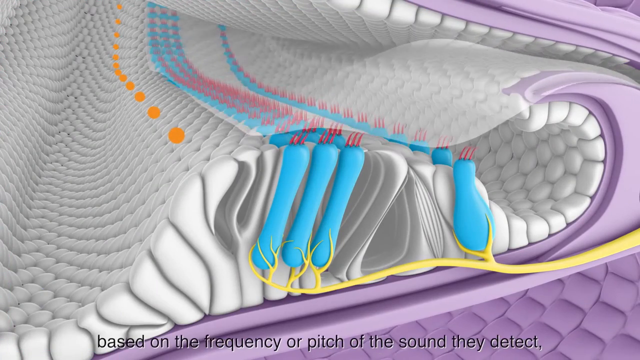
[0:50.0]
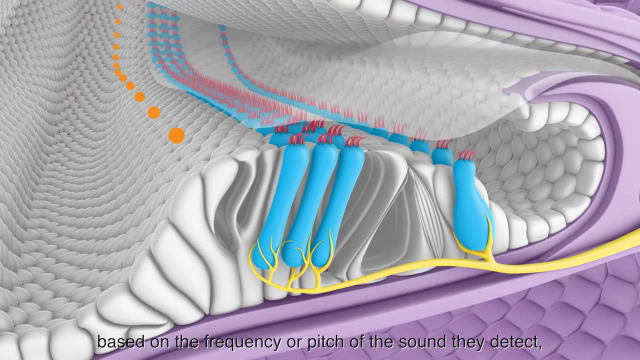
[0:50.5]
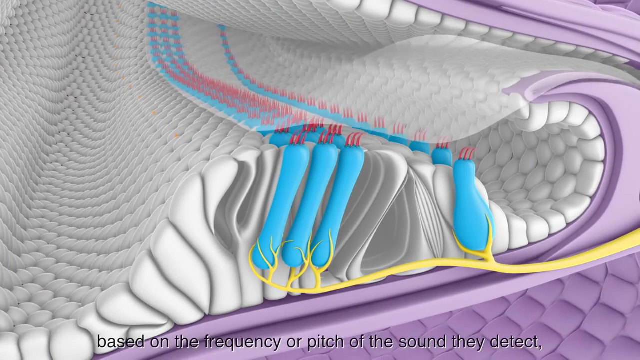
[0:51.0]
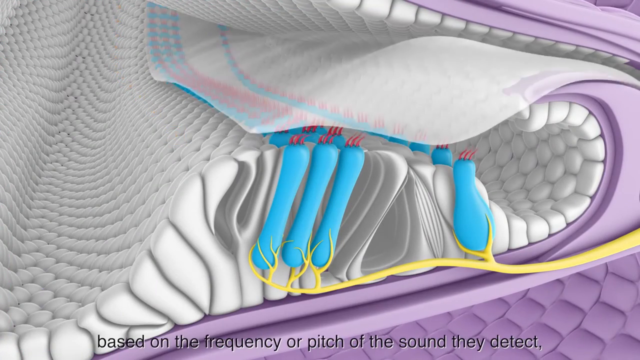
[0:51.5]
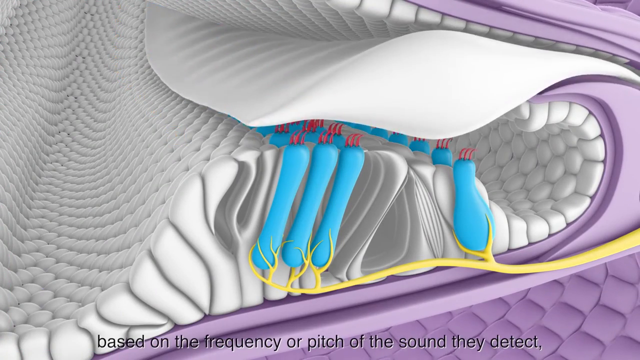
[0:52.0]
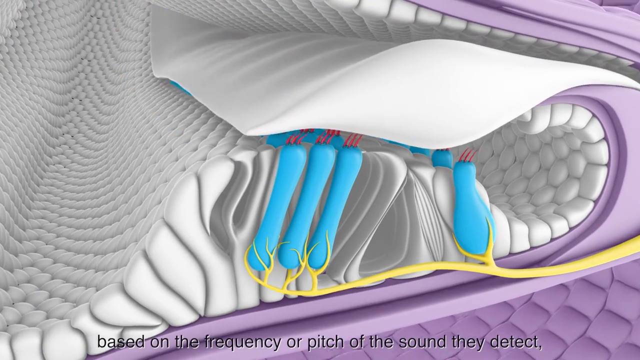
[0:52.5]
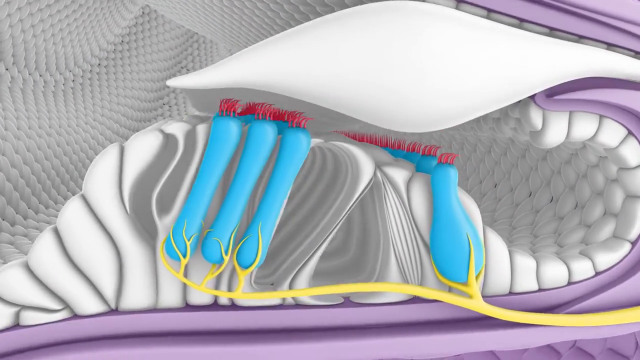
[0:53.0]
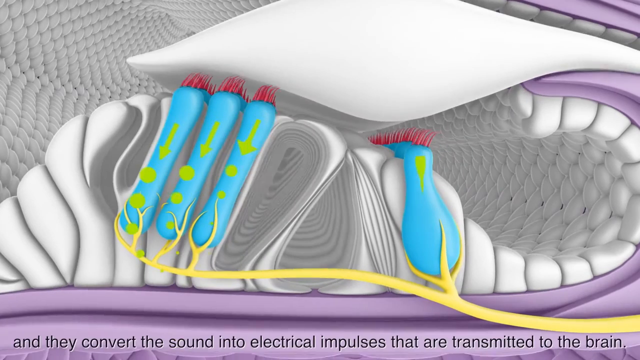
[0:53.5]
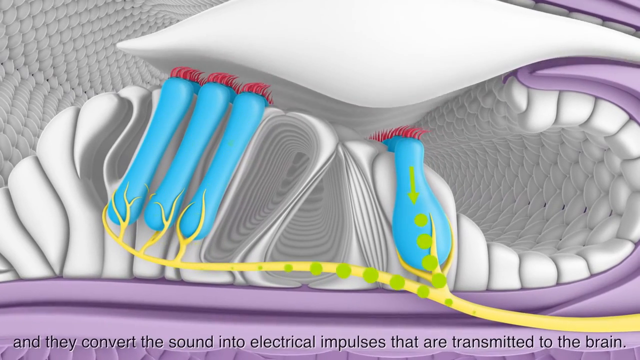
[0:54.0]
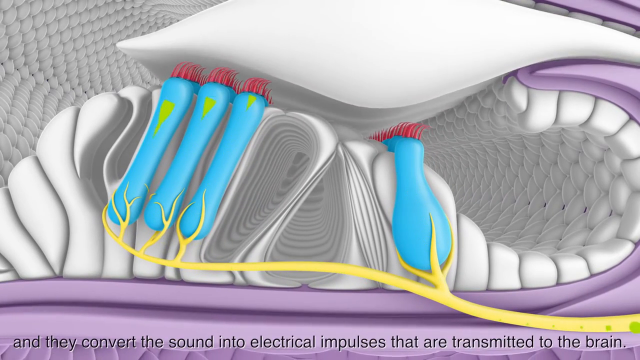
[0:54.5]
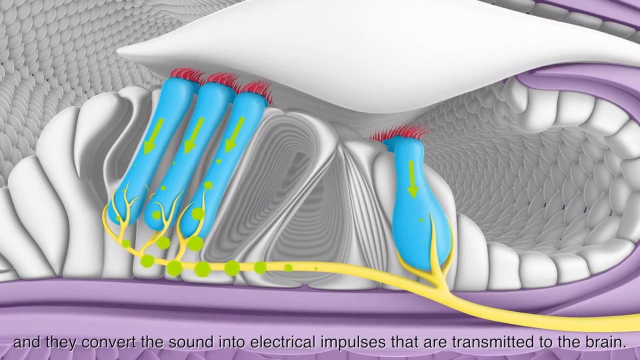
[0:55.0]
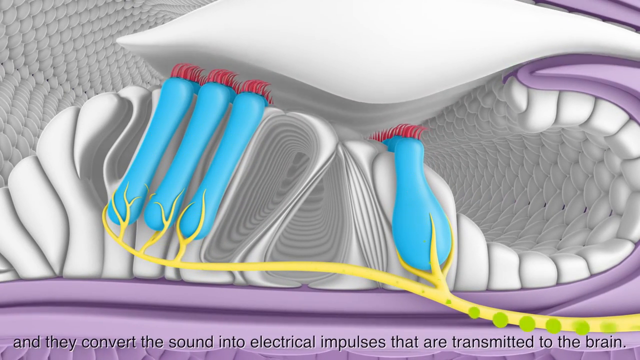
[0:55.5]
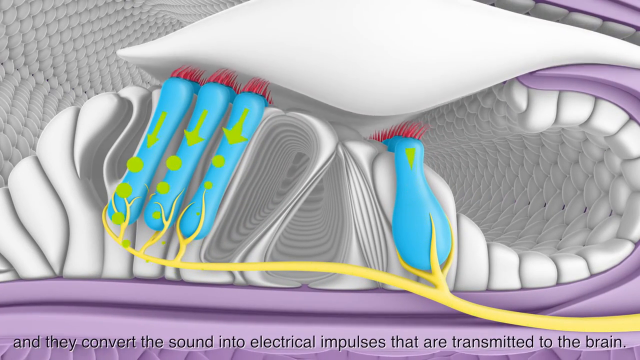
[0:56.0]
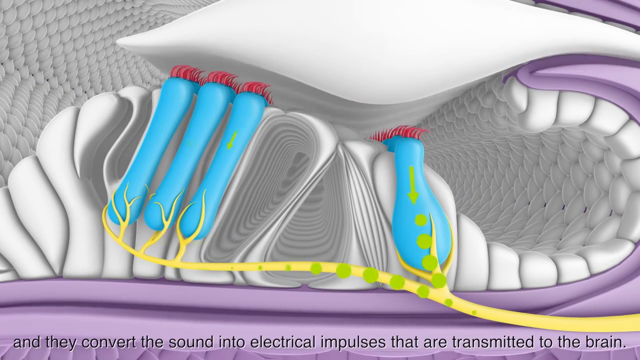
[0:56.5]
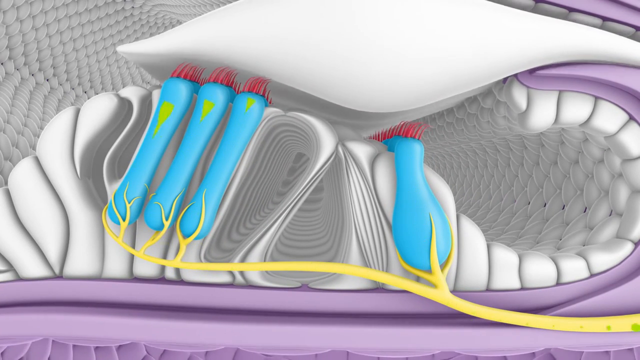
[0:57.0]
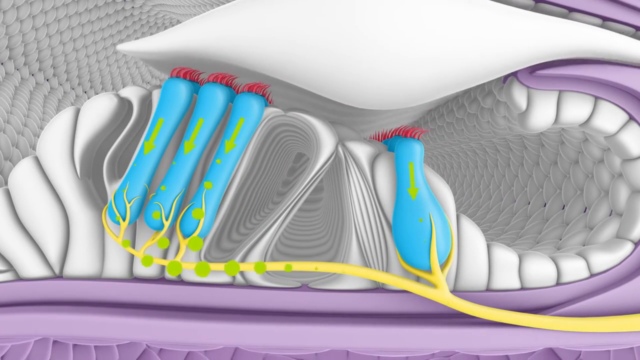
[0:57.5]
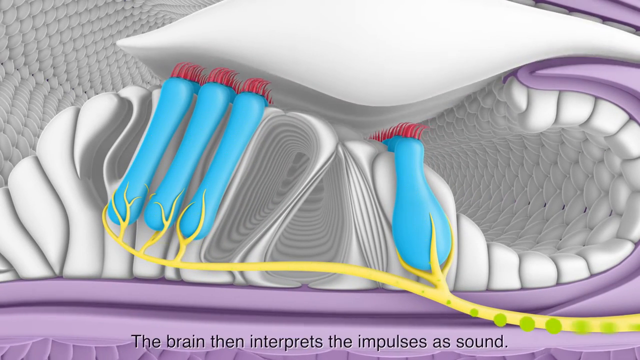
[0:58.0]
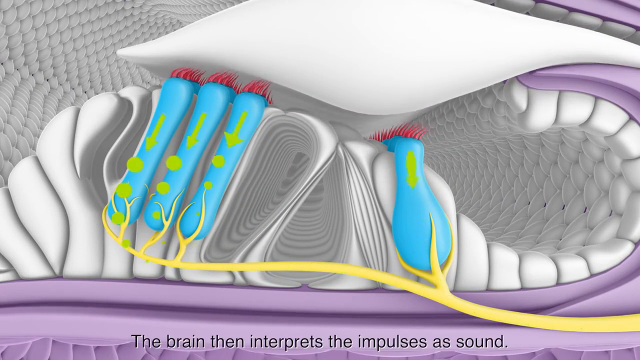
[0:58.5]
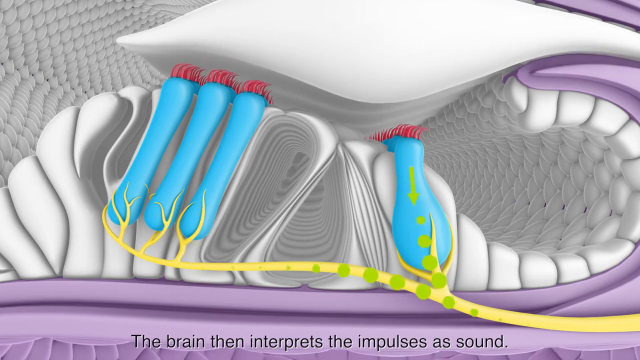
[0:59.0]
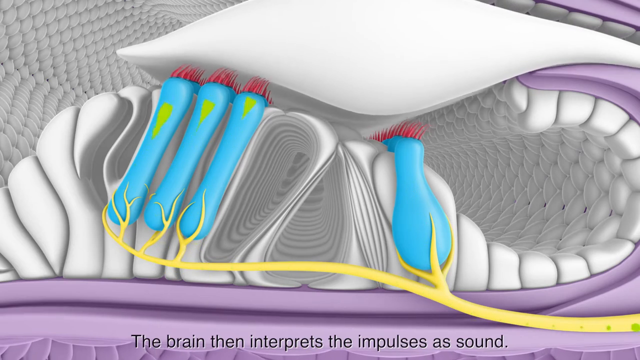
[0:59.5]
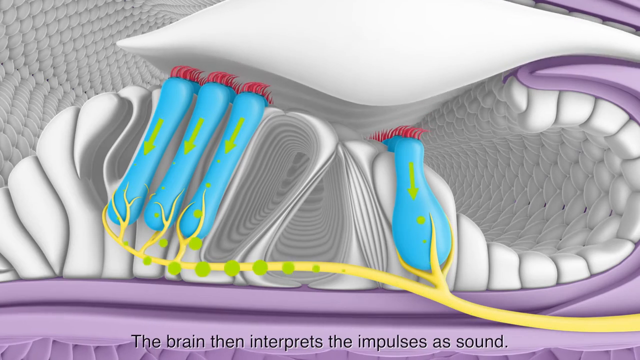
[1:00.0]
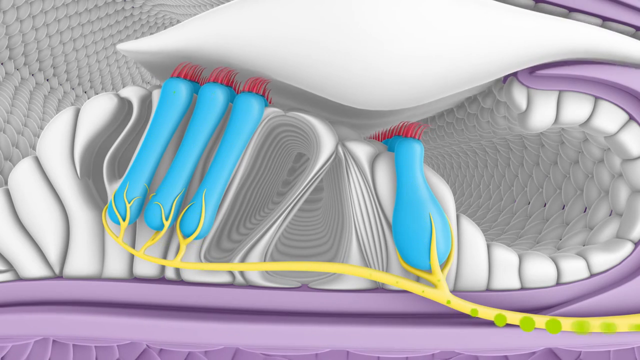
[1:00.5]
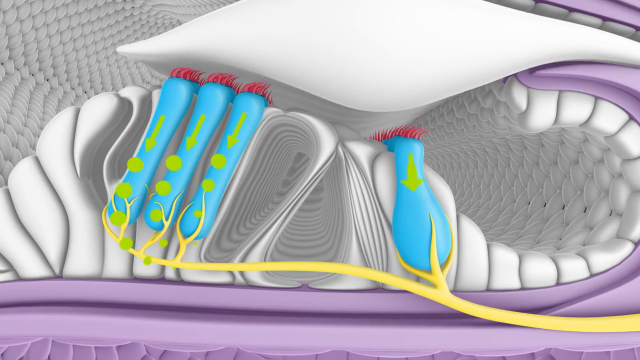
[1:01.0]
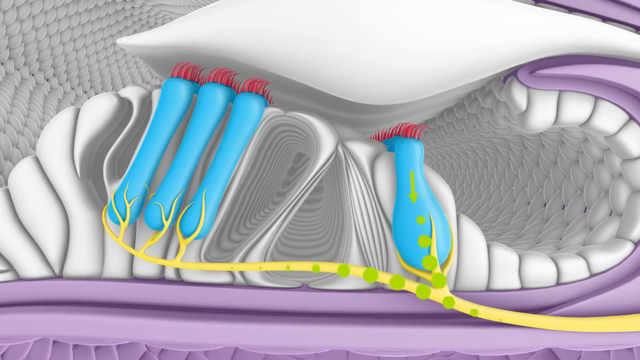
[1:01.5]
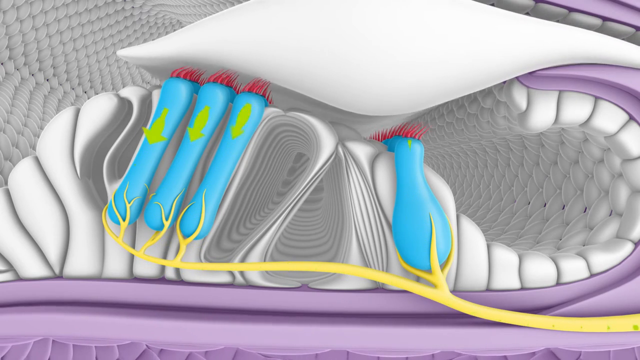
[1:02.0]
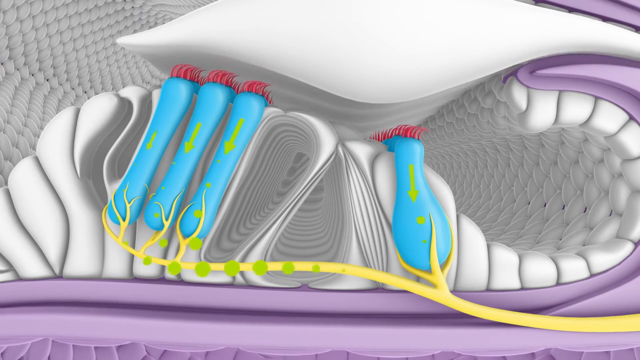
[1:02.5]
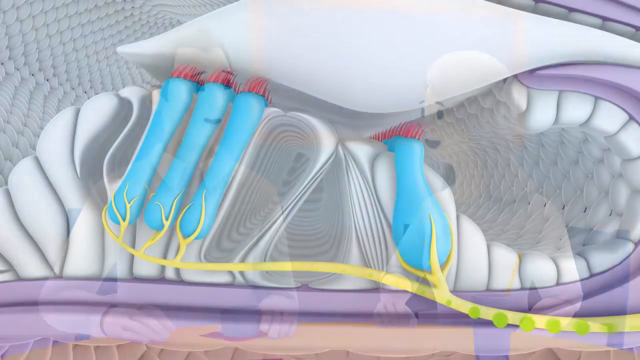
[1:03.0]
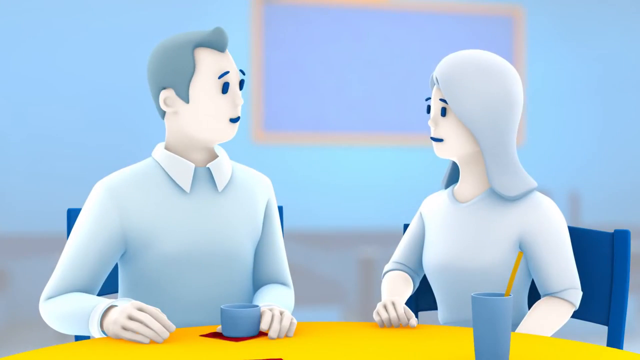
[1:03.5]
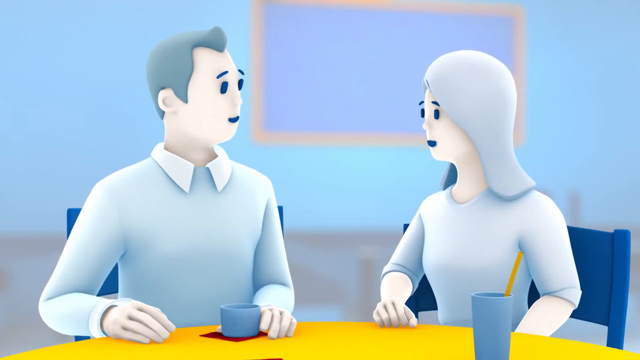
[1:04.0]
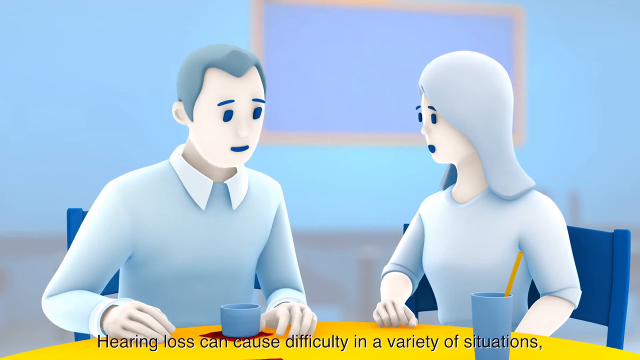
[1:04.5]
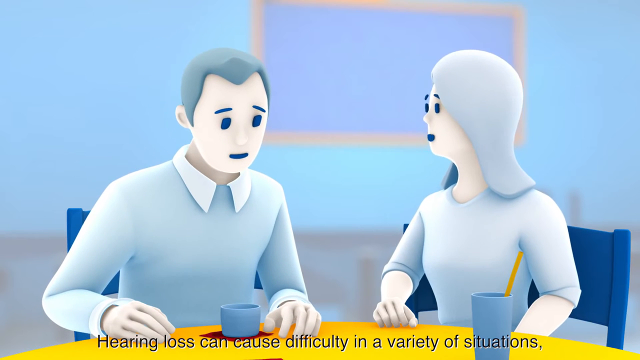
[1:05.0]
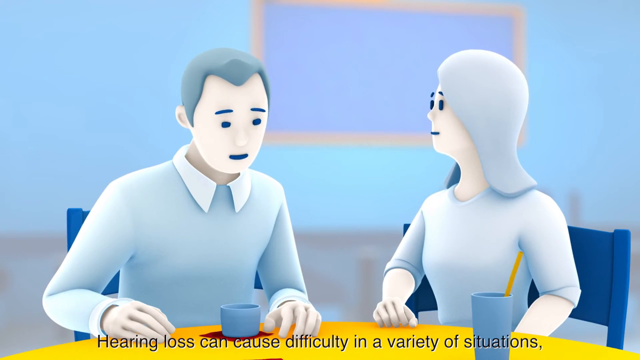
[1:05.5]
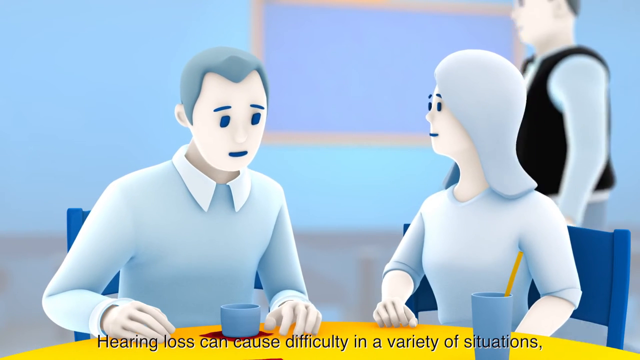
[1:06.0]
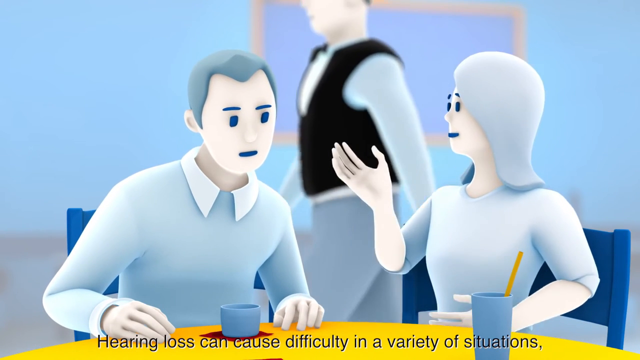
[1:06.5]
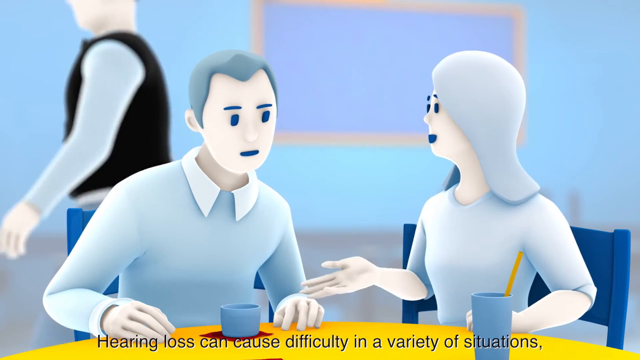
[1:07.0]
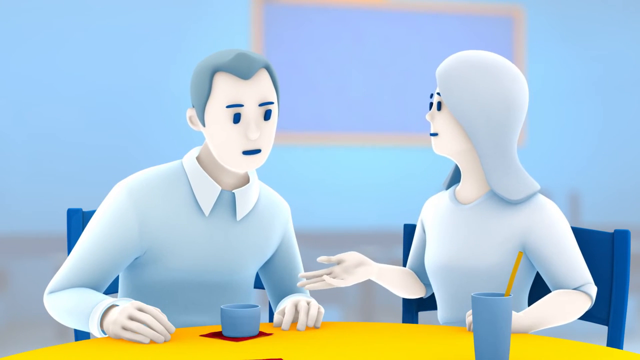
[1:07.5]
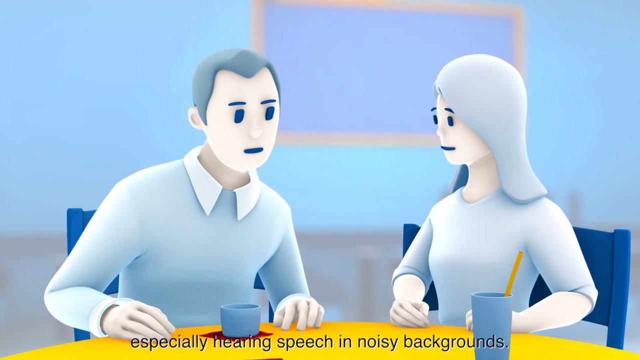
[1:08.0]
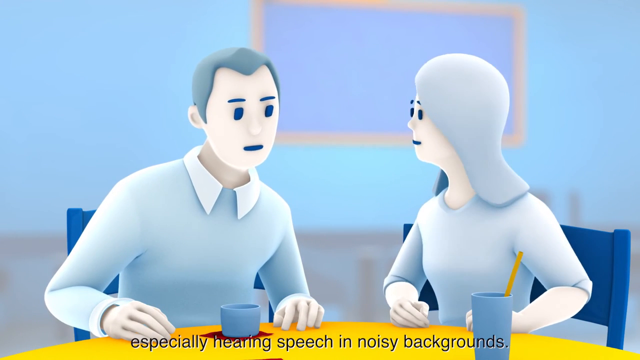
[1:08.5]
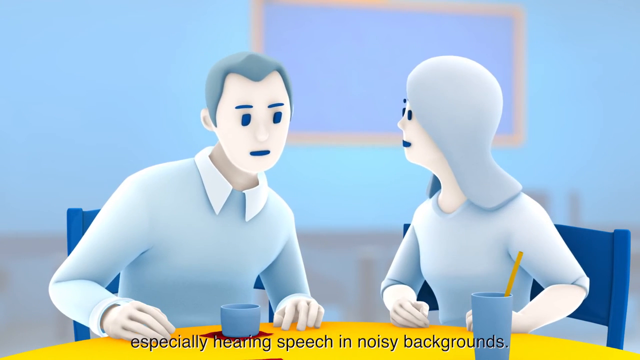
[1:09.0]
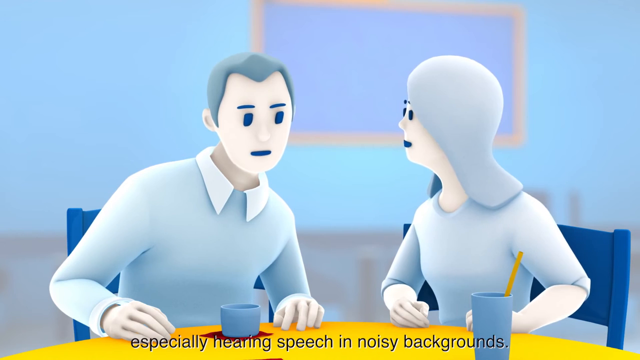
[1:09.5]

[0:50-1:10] The animation shows sound waves coming into the ear and moving on into other parts of the inner ear. On the screen are what look like blue tubes inside the ear, lined up in rows. On the upper end of each are three red hair-like filaments, and on the lower end of each blue tube is a vein or nerve that looks yellow; these attach to a larger vein that moves off toward the right. There are lots of little white puffy things and some purple in the coloring. What looks like a wave of material waves up and down in a wave pattern, and each time it does, it pushes down on the red hairs, which sends an electrical jolt through the blue tube and down into the yellow vein. This is represented by green dots and green arrows showing the direction. The video then goes back to the couple sitting at a table, the male on the left and the female on the right. They have cups in front of them and are mostly blue and gray, and they look like they are talking to each other. The female talks to the male, and the male turns his head to listen. In the background, somebody walks by. The male leans his head closer to the female to hear what she is saying, as if he is struggling.